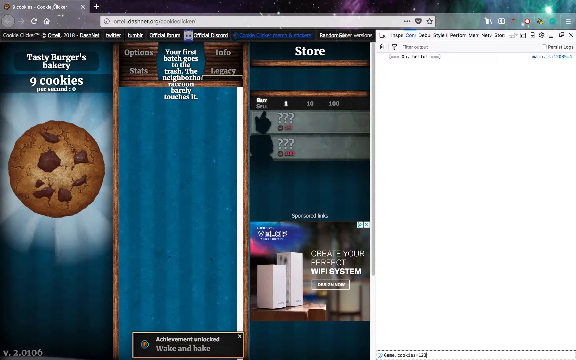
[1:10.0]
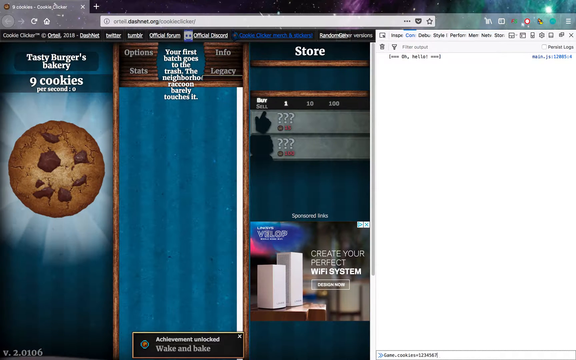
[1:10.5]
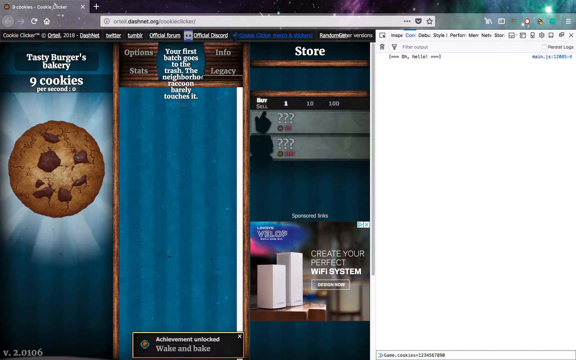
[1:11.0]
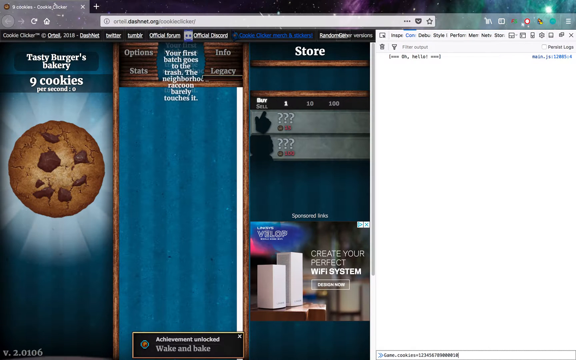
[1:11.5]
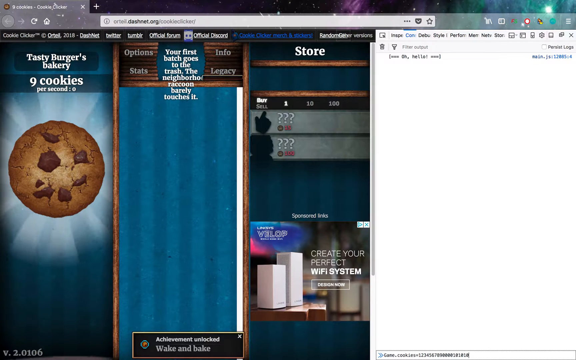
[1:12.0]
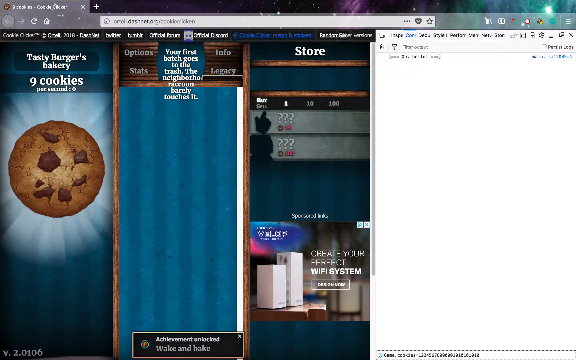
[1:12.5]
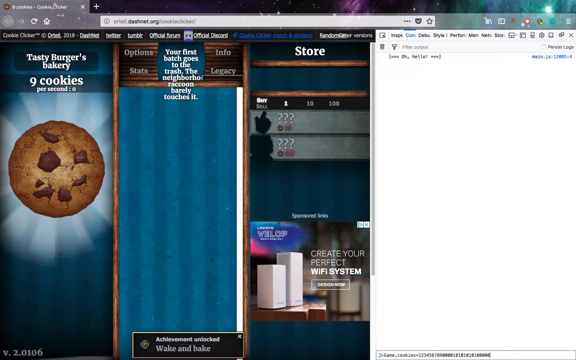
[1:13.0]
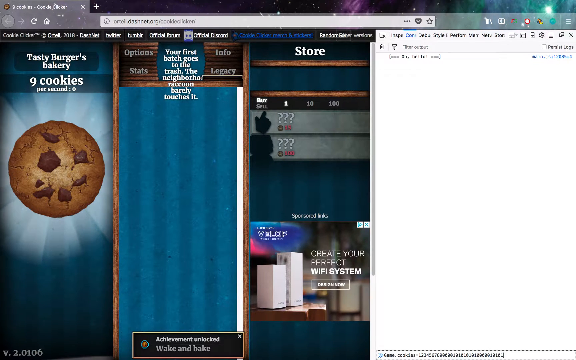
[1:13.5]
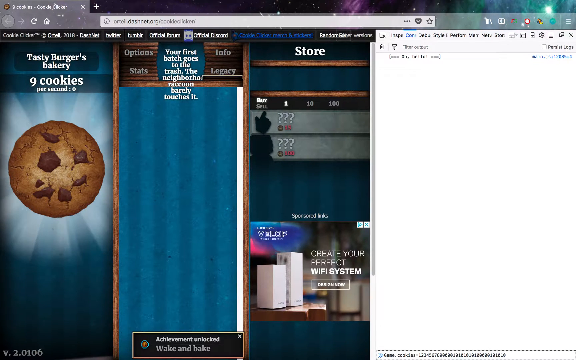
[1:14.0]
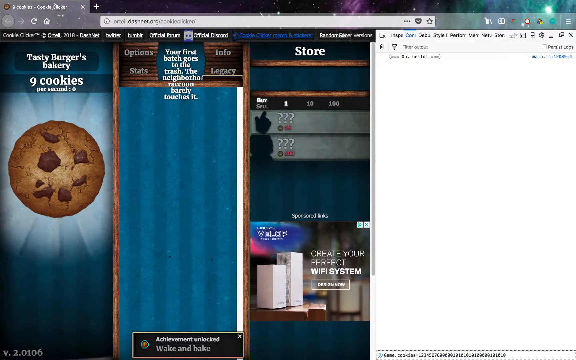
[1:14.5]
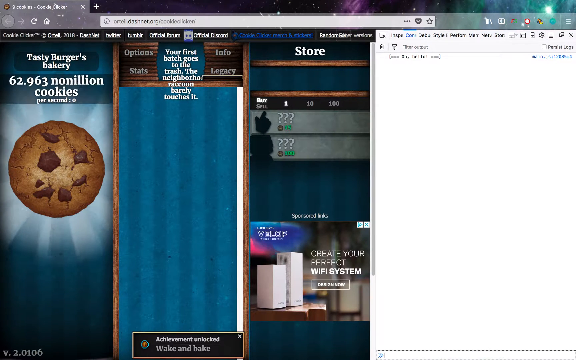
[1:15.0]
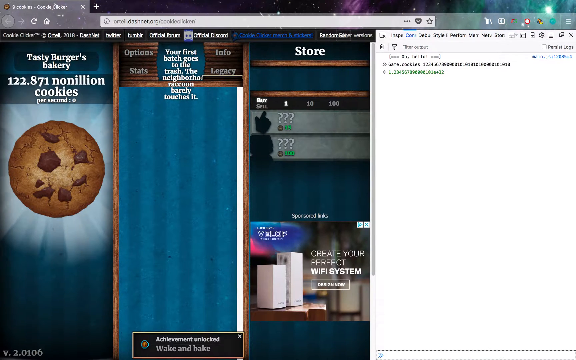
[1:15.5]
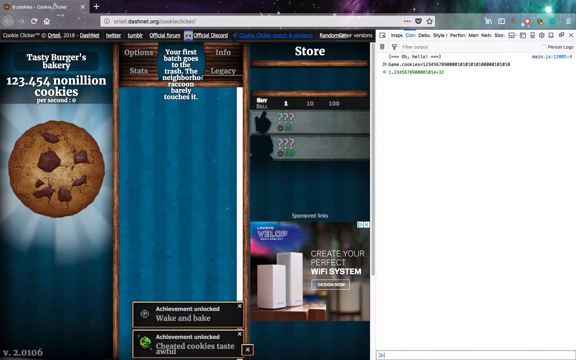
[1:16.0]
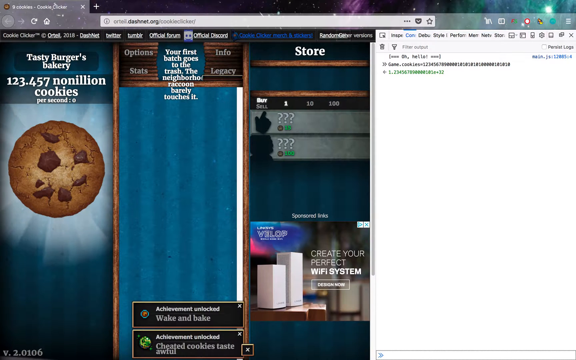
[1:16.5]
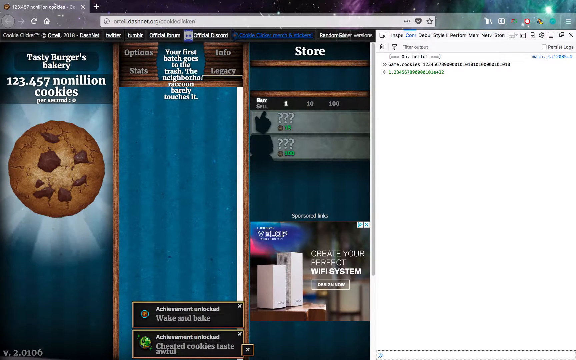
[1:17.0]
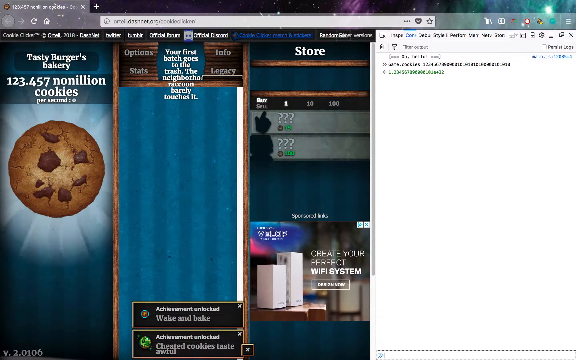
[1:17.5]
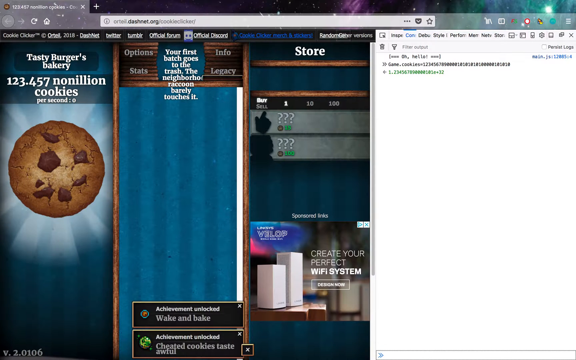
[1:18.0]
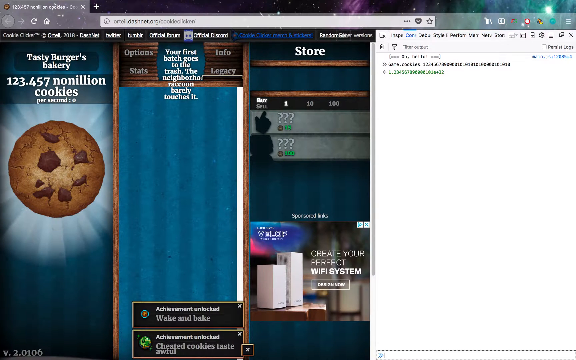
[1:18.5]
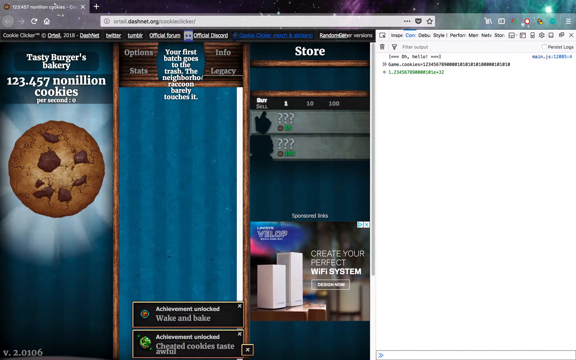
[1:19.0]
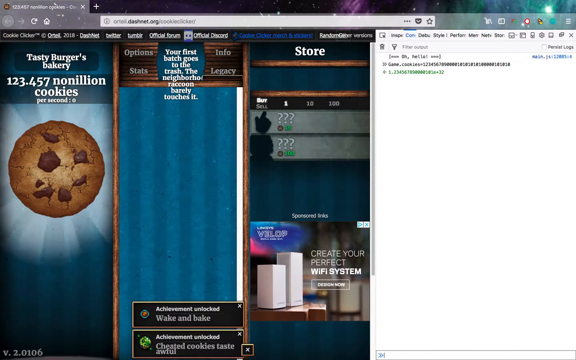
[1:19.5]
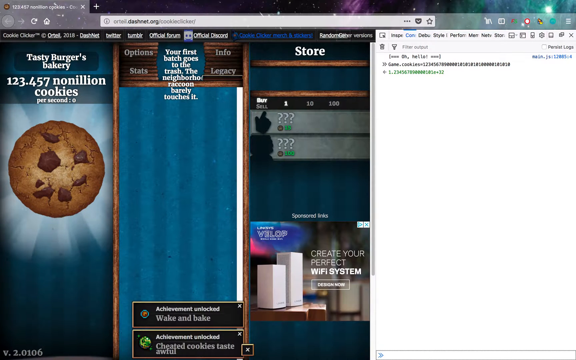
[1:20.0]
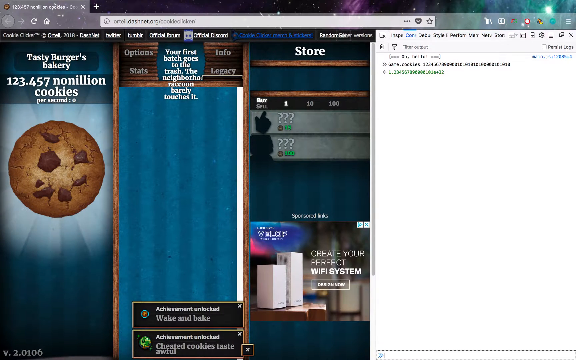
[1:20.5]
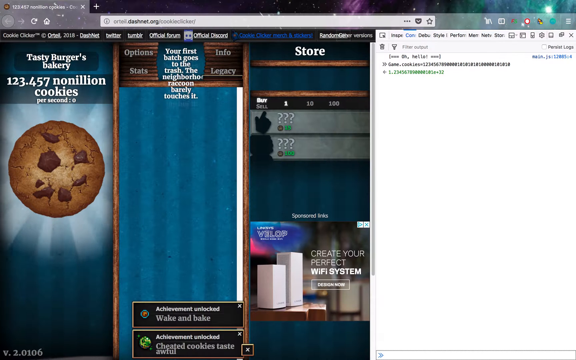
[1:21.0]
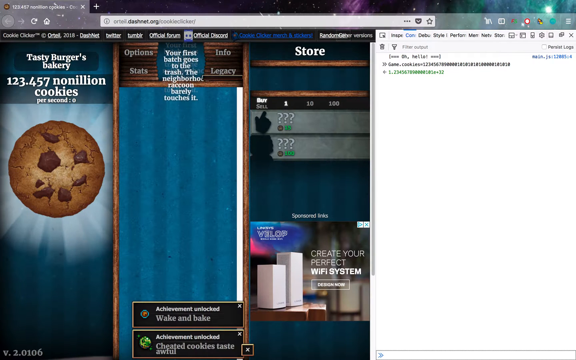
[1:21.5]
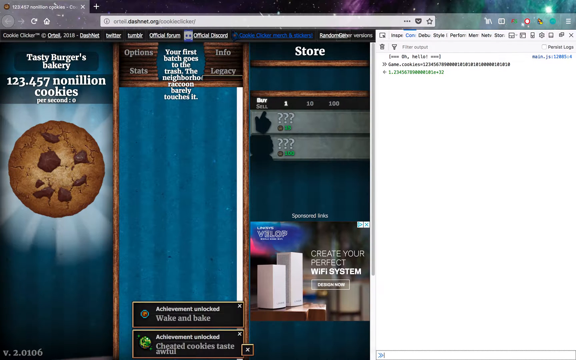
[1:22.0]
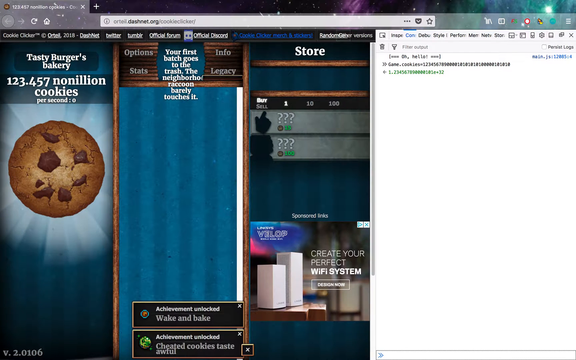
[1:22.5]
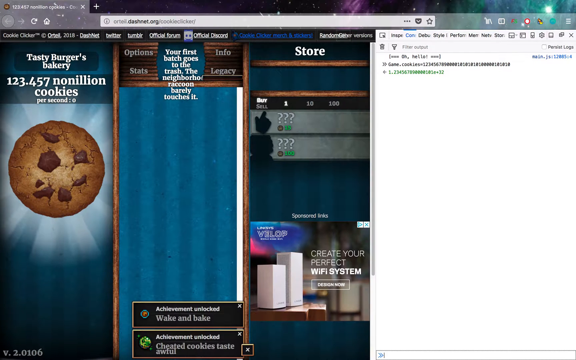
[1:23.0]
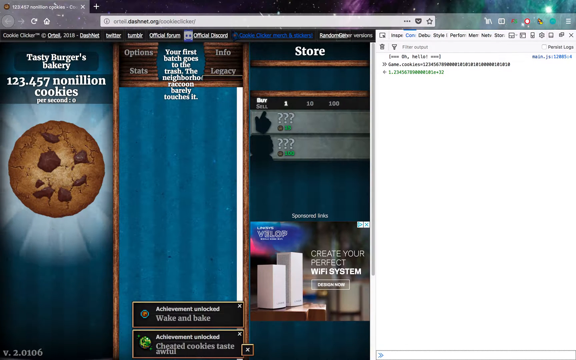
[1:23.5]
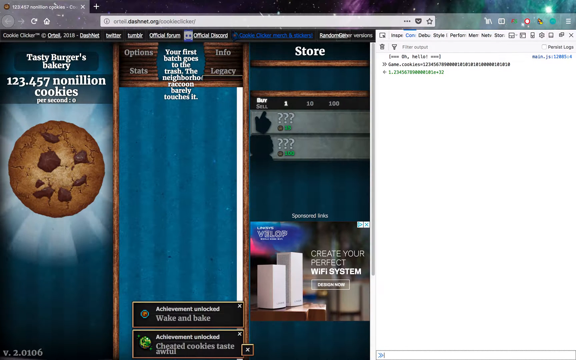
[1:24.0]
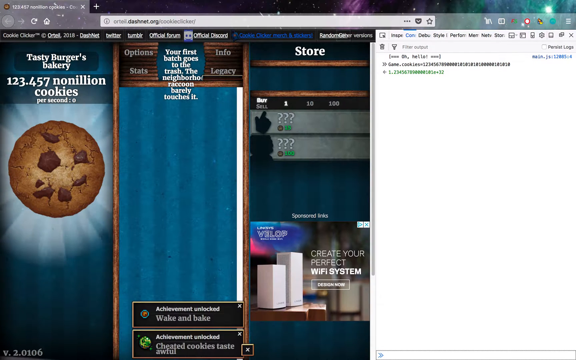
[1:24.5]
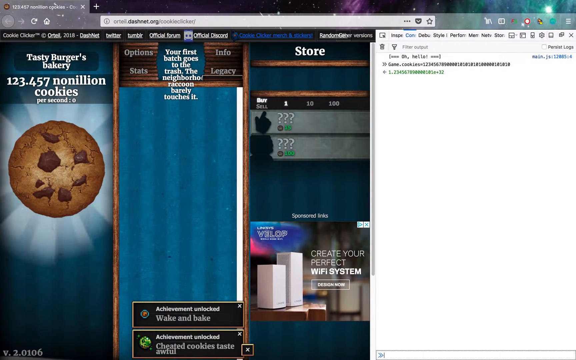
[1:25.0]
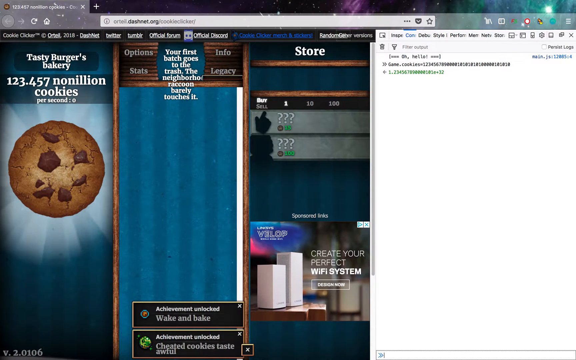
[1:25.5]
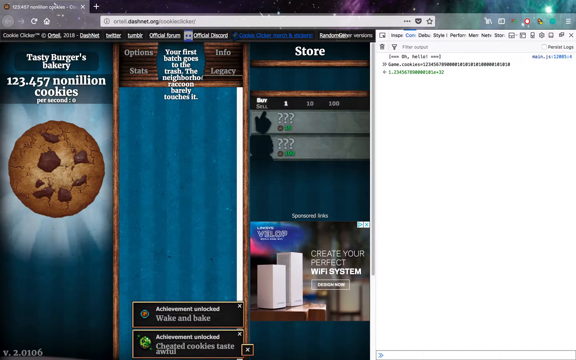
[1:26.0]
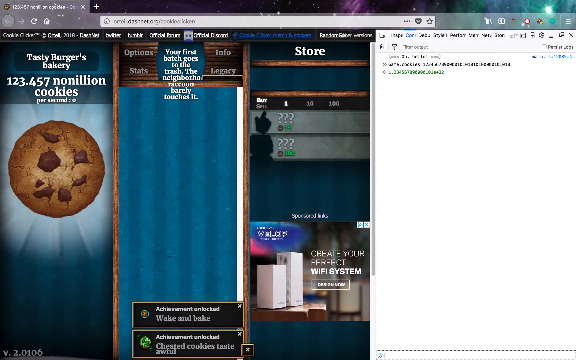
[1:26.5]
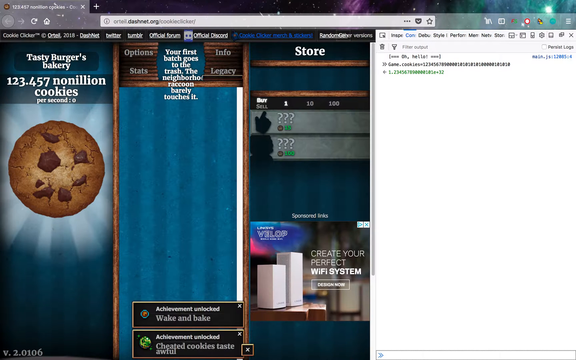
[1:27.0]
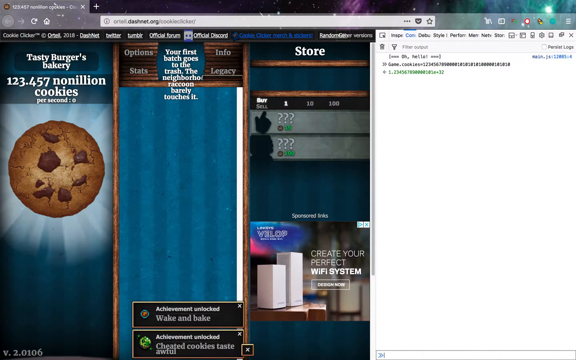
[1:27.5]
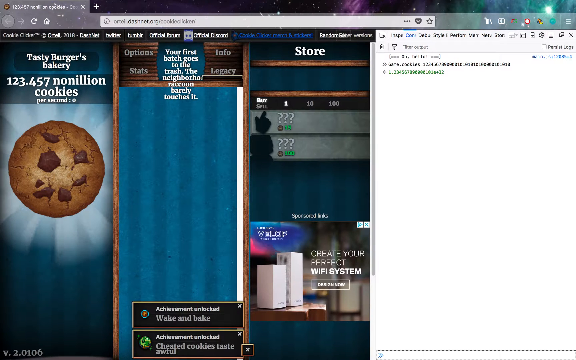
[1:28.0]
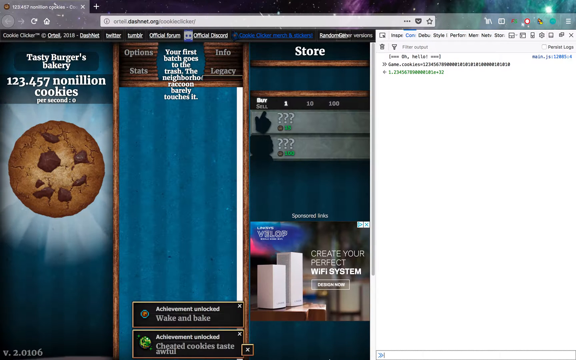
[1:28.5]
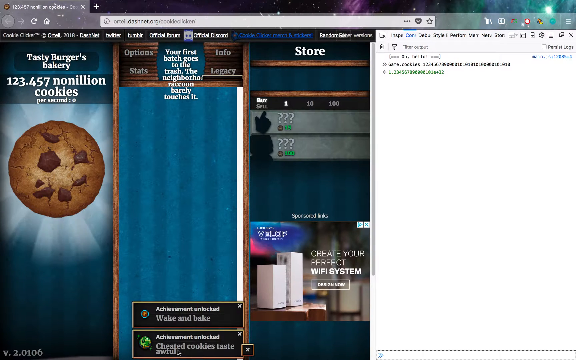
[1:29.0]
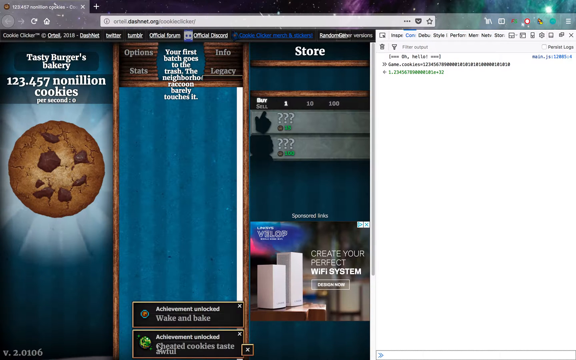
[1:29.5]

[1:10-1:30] He continues inspecting the element and typing in a search. The cookie is still on the left side. The inspect element portion of the screen stays blank, with nothing populating as he types; he seems to be typing random numbers and letters. As he types something in, the number of cookies suddenly changes to millions, read as 1, 2, 3, 4, 5, 7, 9 million cookies, apparently because he typed a piece of code that changes the game.